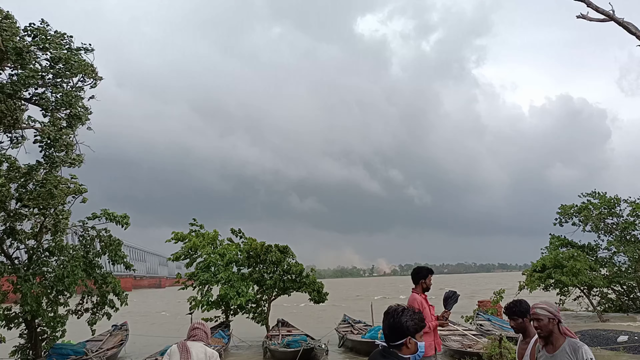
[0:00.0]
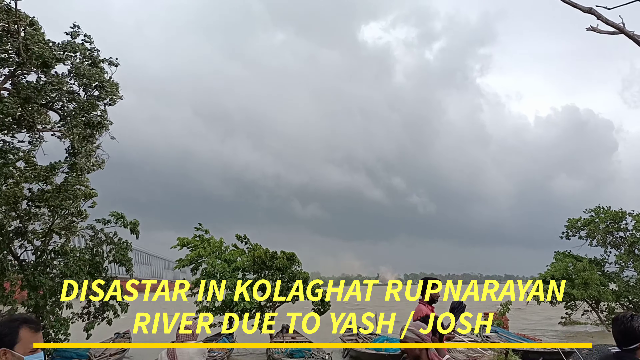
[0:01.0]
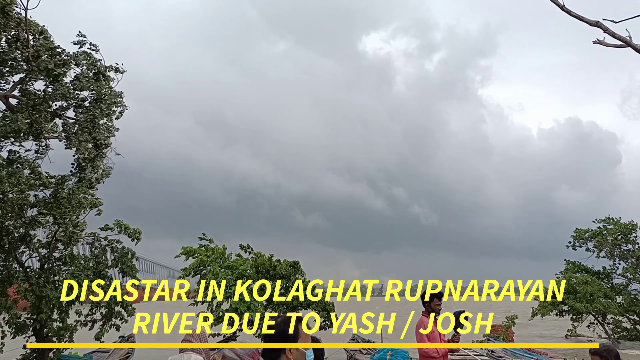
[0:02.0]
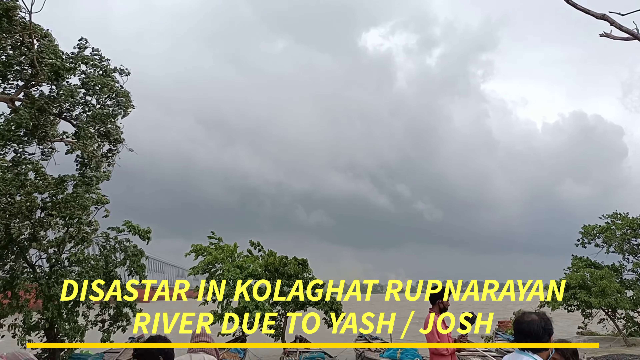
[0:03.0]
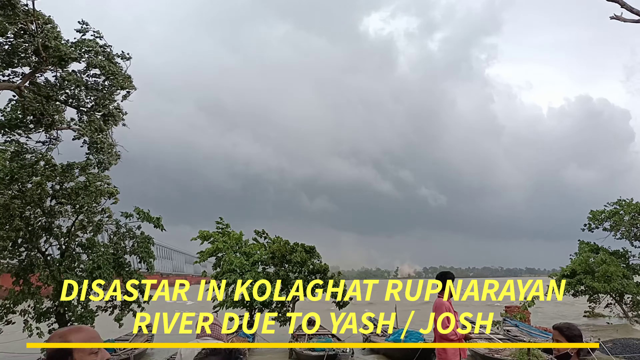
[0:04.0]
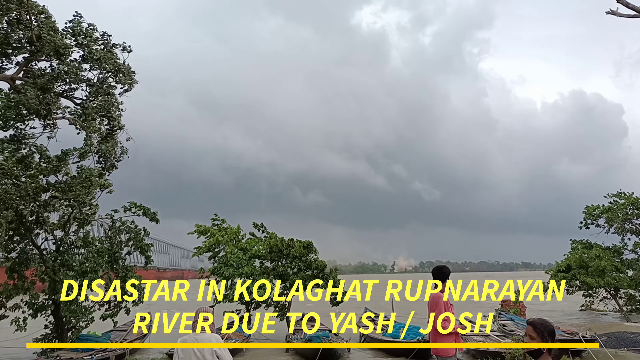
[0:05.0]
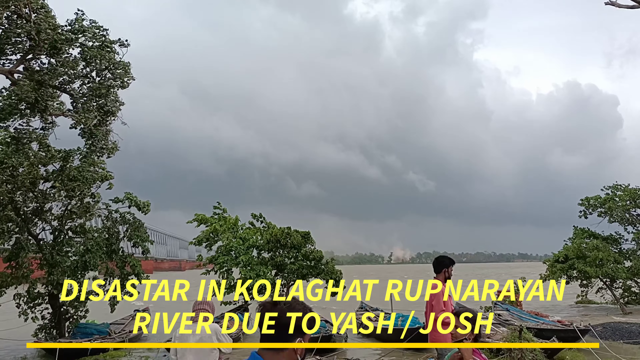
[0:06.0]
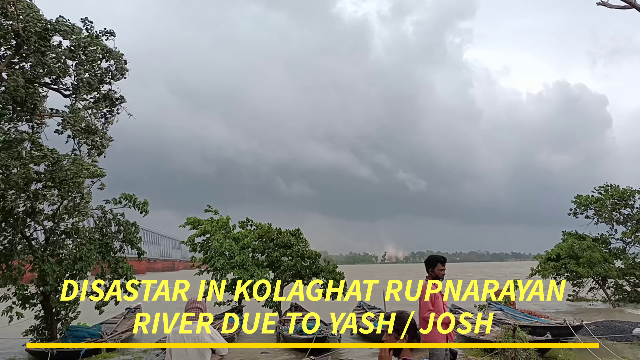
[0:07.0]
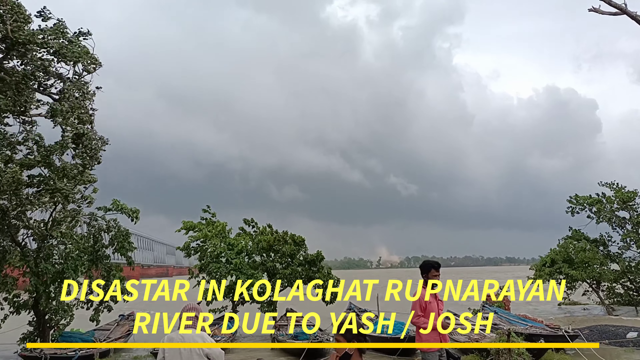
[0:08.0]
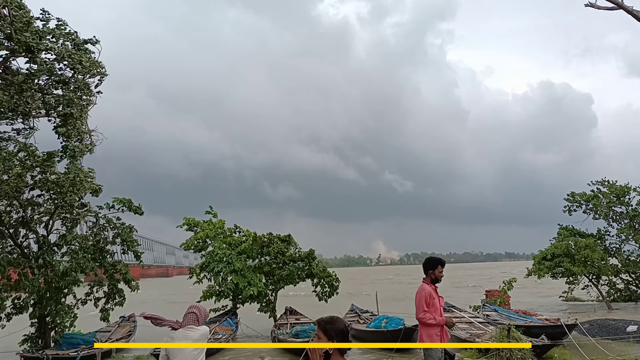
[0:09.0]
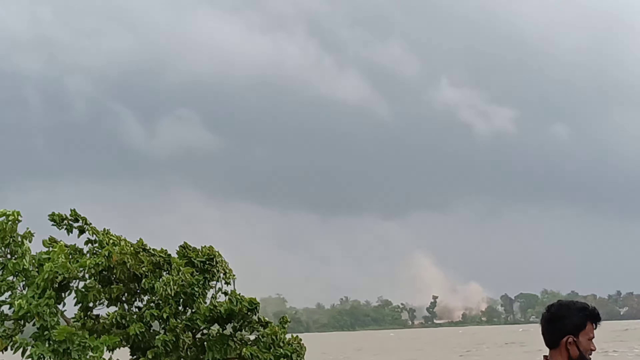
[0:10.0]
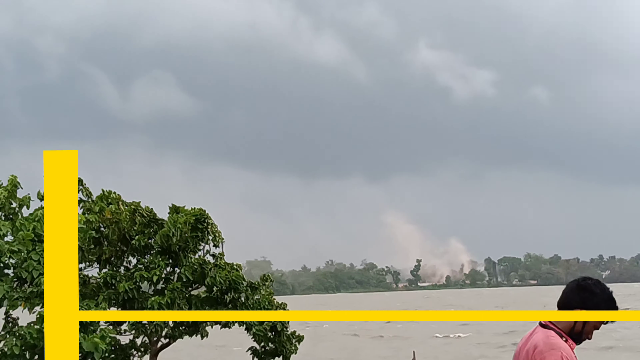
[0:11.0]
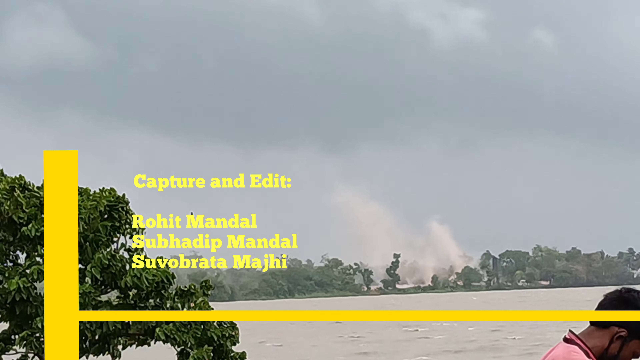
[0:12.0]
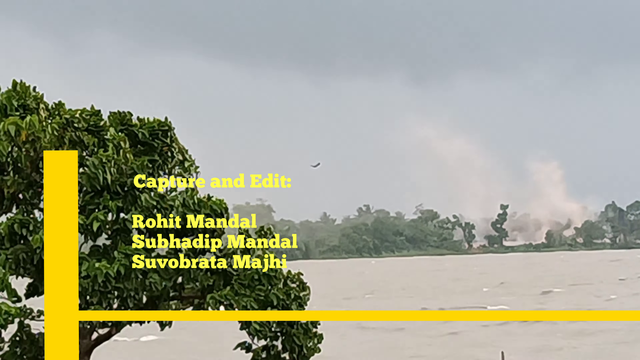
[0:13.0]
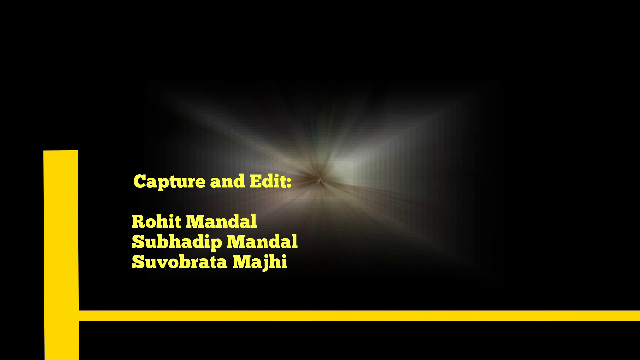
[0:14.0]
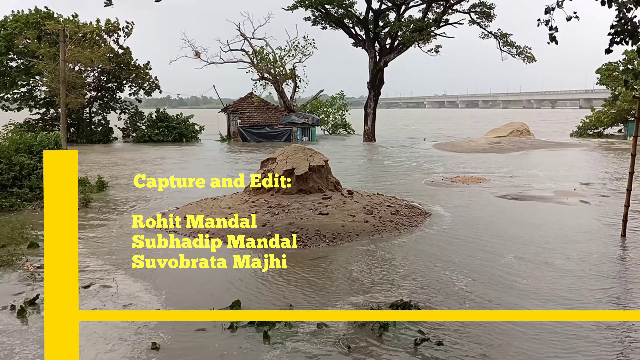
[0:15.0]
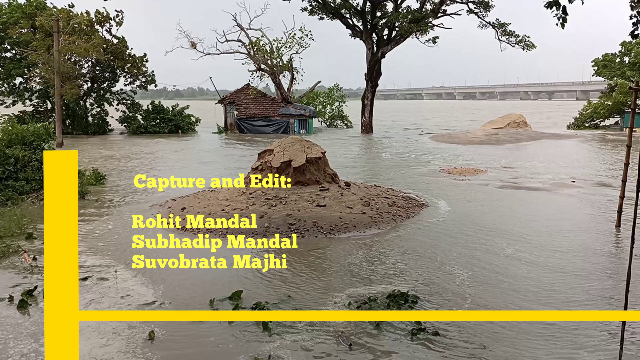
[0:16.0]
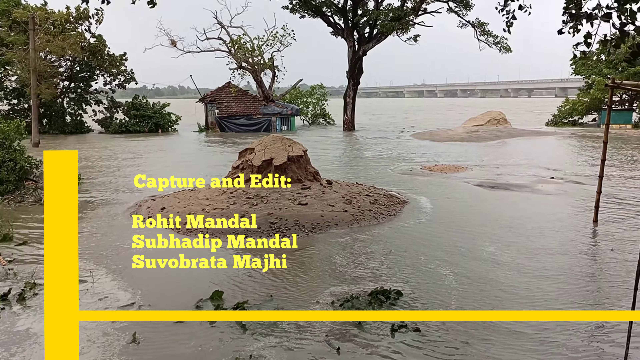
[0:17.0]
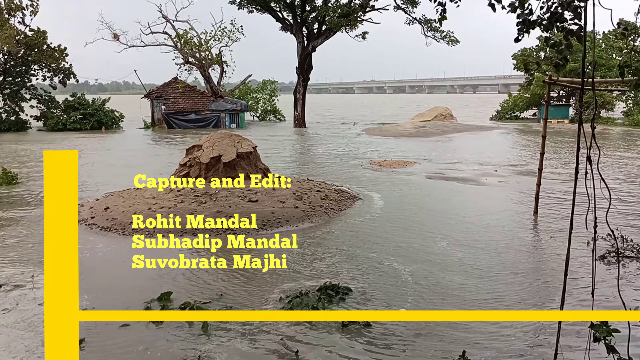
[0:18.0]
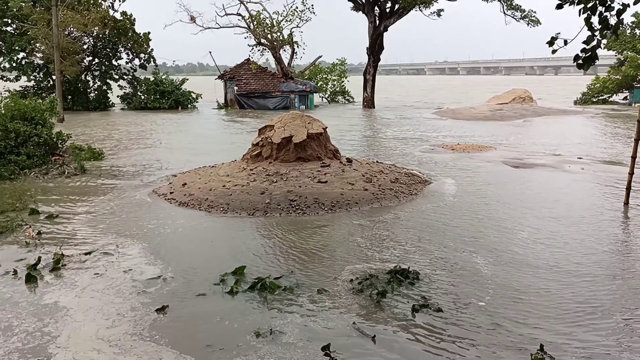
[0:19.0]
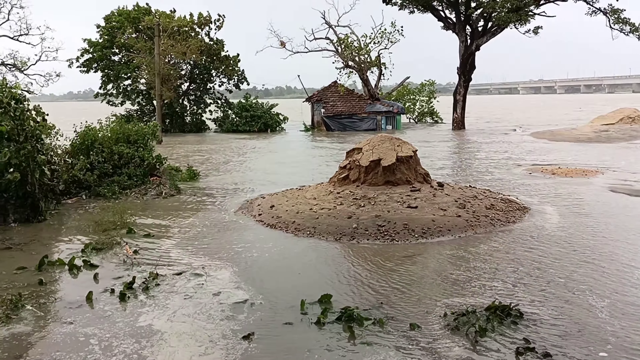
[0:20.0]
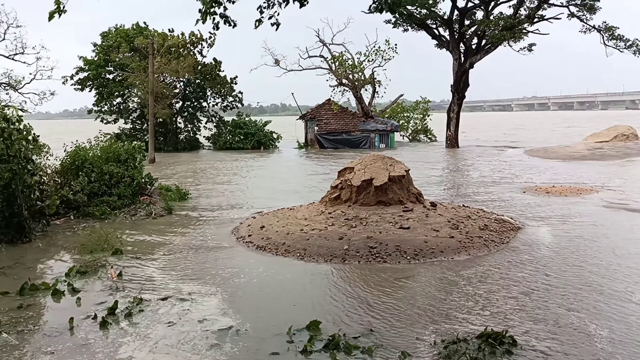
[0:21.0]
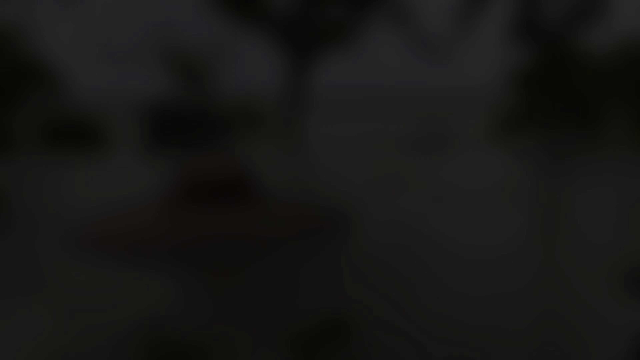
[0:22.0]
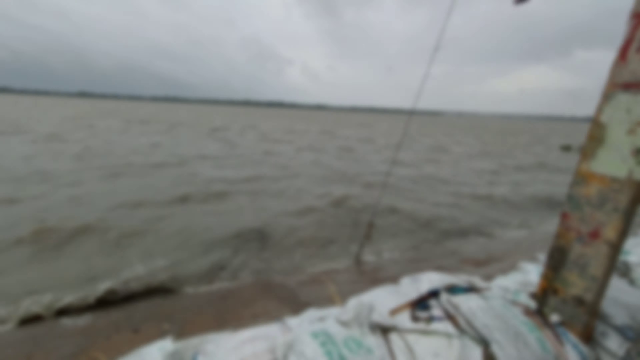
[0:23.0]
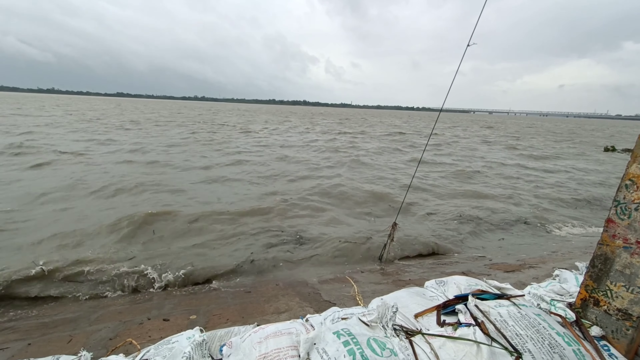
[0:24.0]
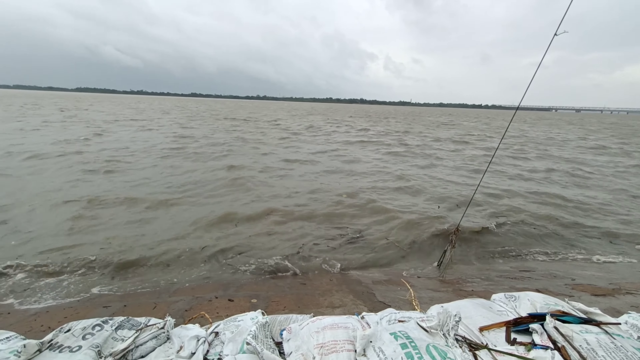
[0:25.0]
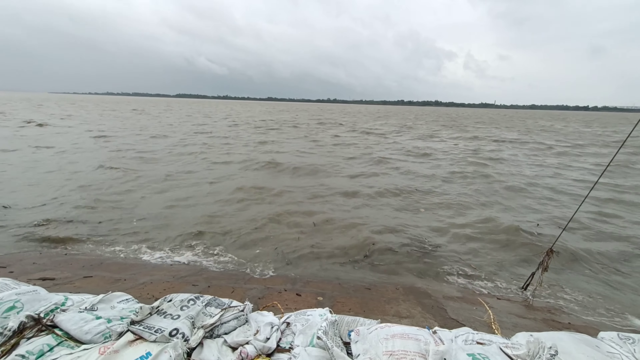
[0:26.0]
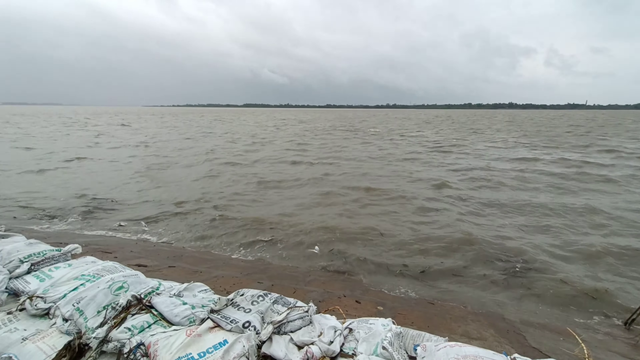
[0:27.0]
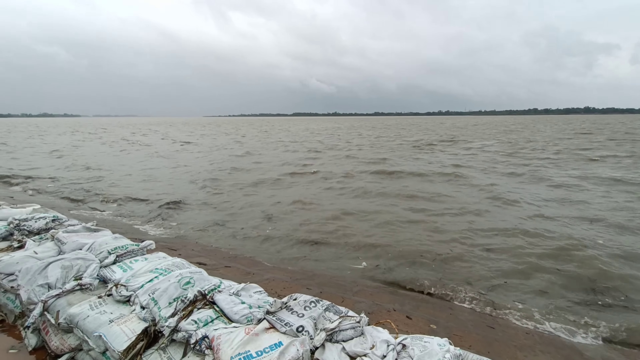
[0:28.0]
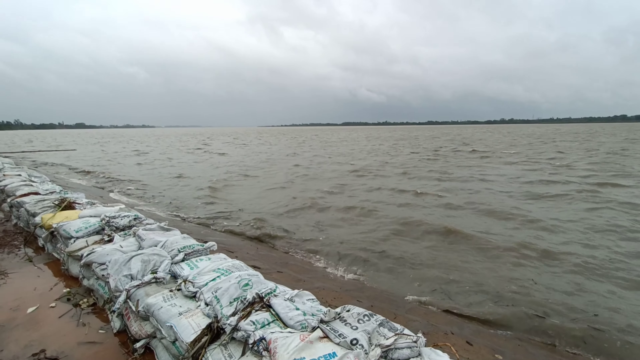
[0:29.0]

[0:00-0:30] Yellow text appears at the bottom of the screen, reading "disaster in Kolagat" and continuing with mention of a river. In the background there are very thick clouds moving quickly, and the trees show strong wind nearby. Something like smoke seems to be coming from the background. More text then appears, reading "capture and edit Robert Mandel, Subapadip Mandel and Subobrata Maji". After that, a flooding scene shows a house peeping up out of the water, seemingly having drifted off, followed by a lot of other water in a boat scene.